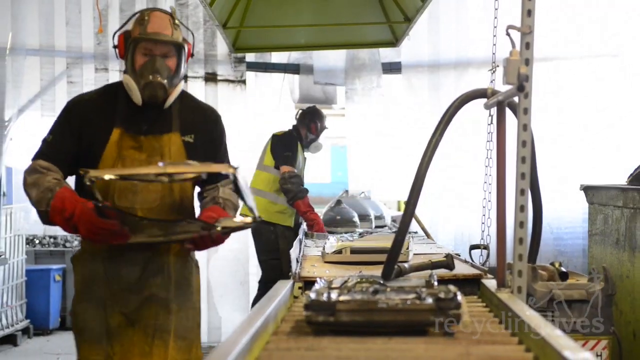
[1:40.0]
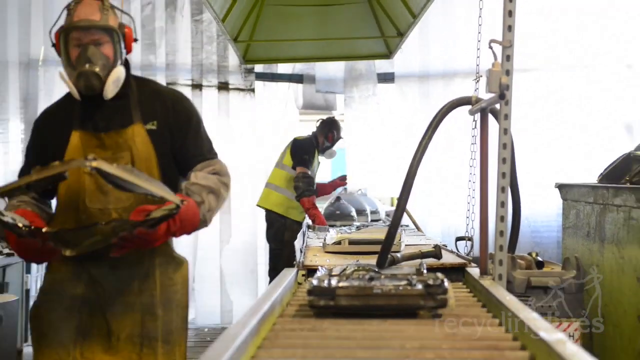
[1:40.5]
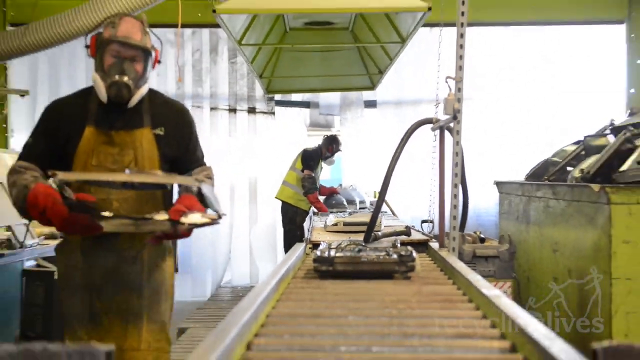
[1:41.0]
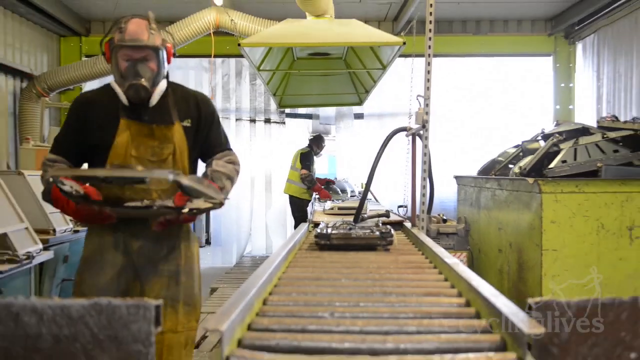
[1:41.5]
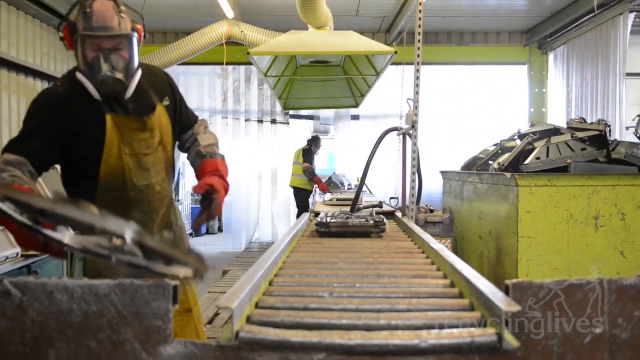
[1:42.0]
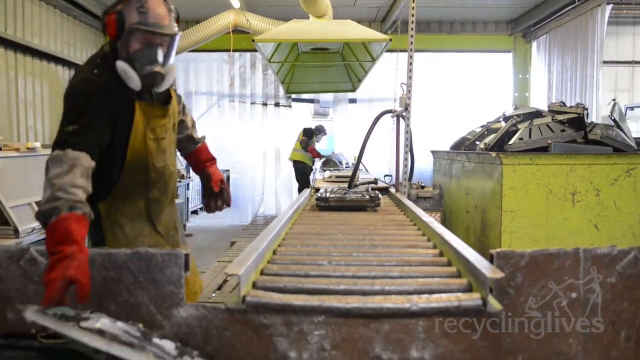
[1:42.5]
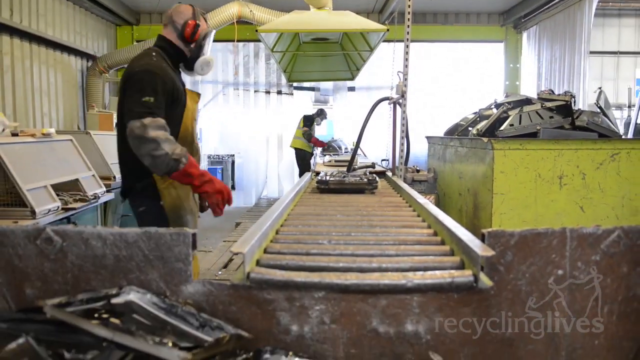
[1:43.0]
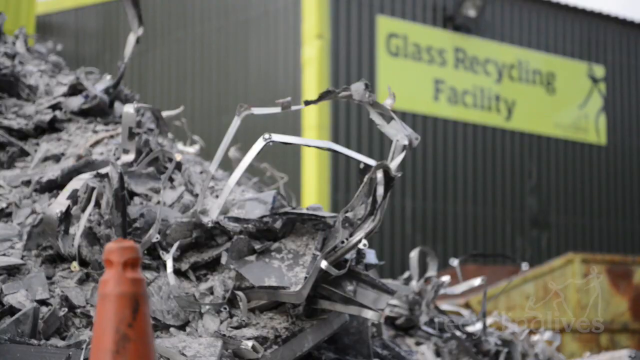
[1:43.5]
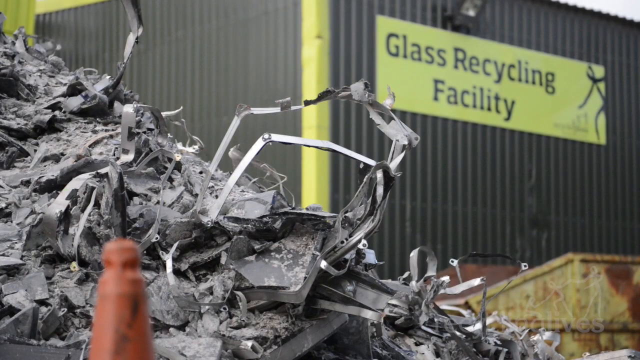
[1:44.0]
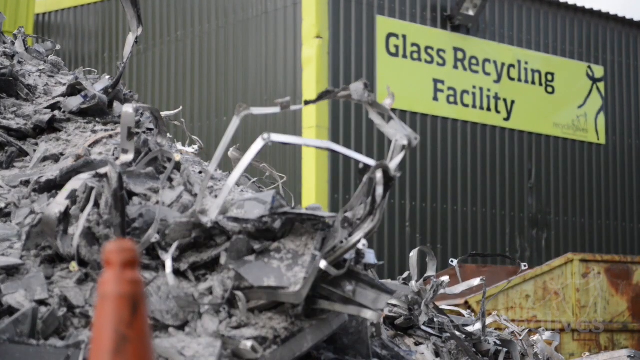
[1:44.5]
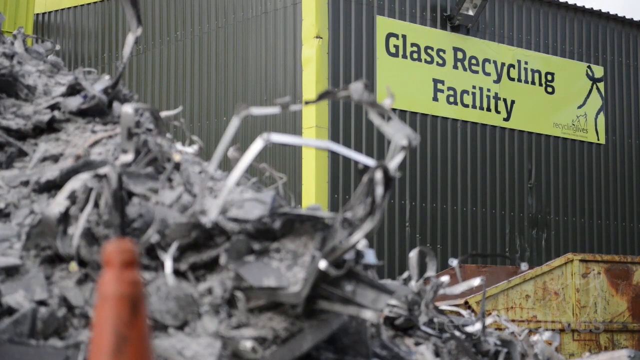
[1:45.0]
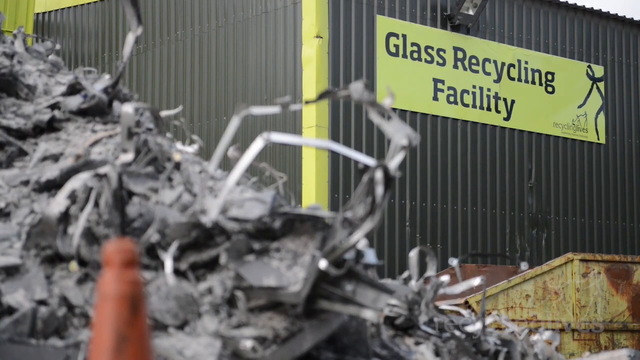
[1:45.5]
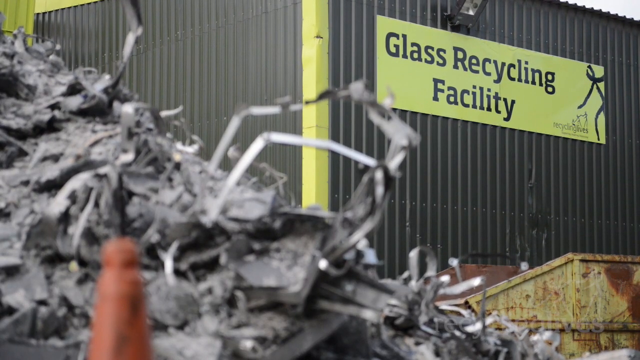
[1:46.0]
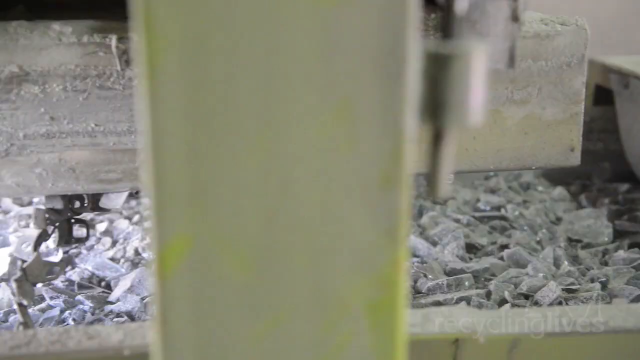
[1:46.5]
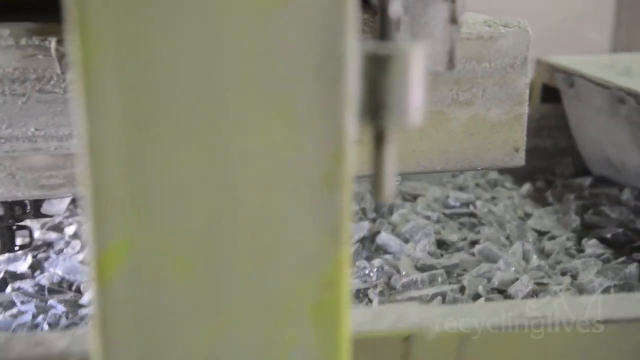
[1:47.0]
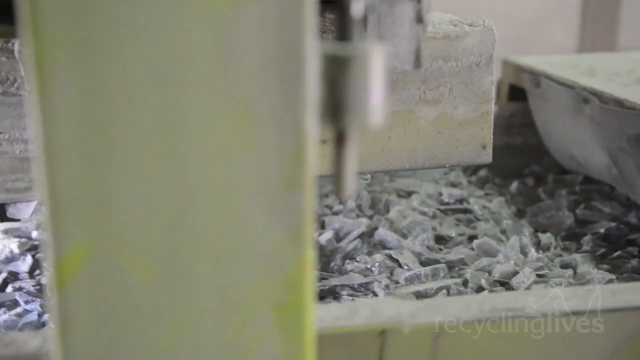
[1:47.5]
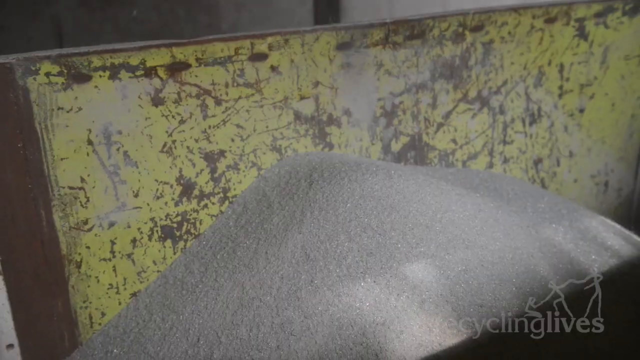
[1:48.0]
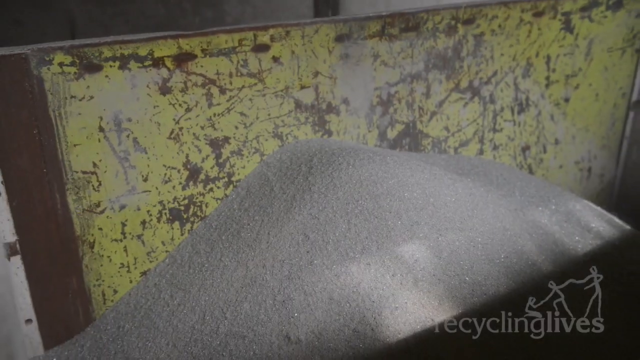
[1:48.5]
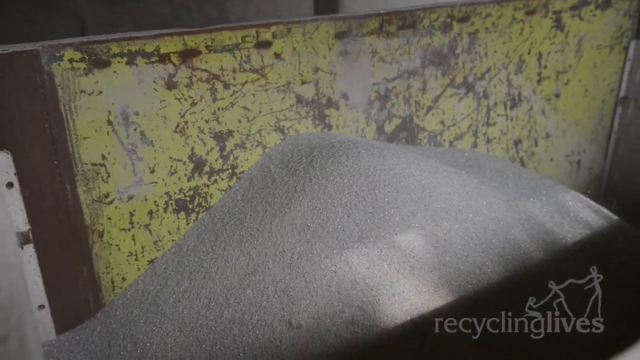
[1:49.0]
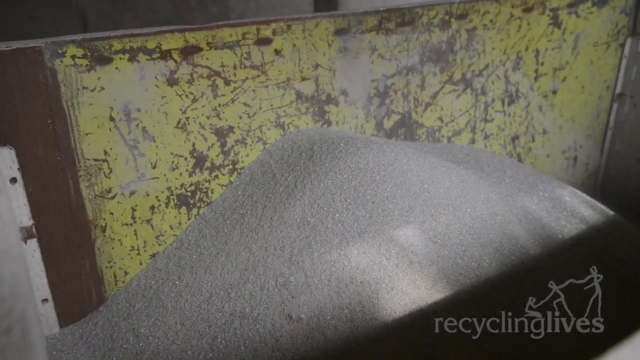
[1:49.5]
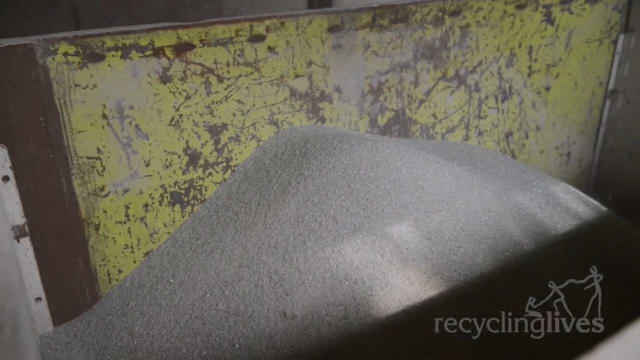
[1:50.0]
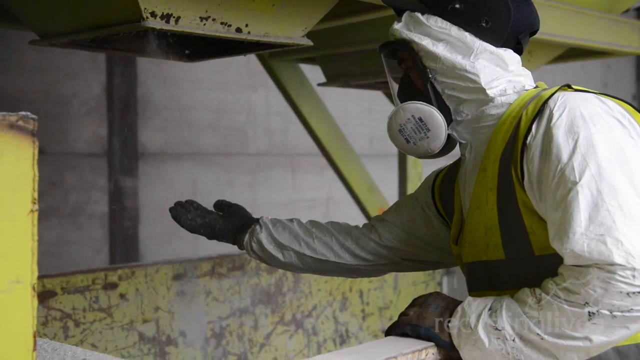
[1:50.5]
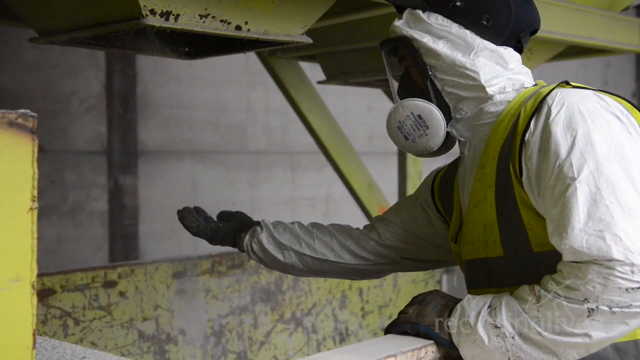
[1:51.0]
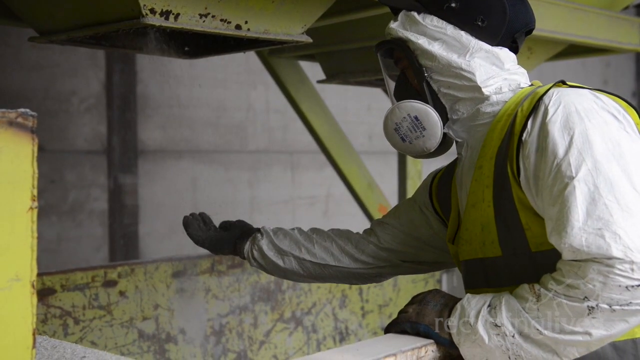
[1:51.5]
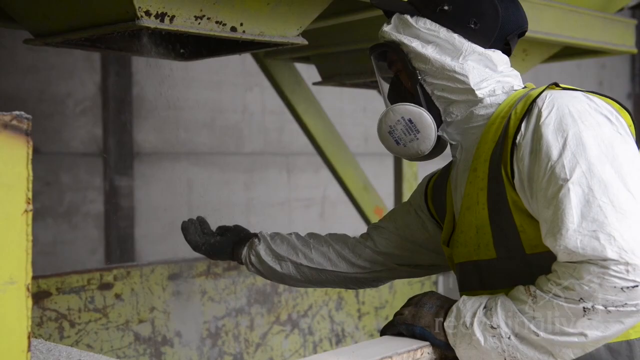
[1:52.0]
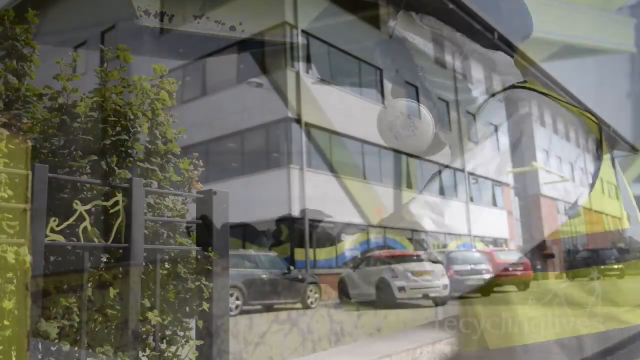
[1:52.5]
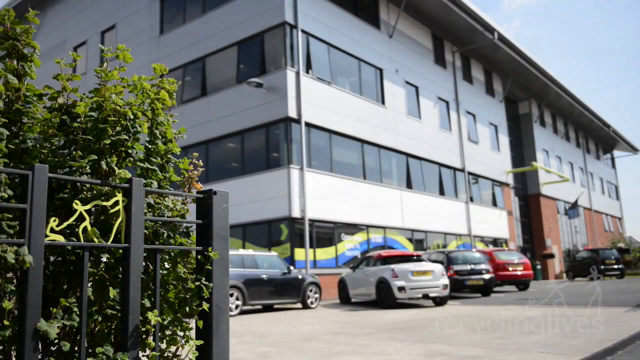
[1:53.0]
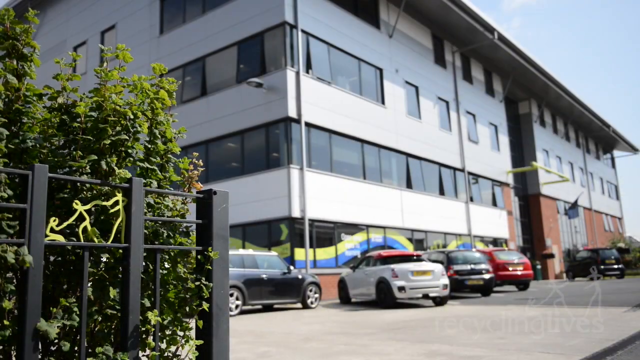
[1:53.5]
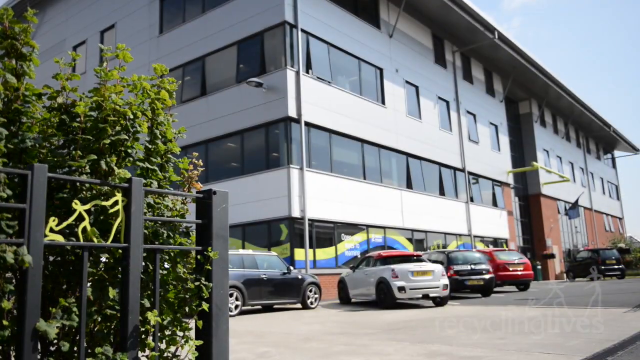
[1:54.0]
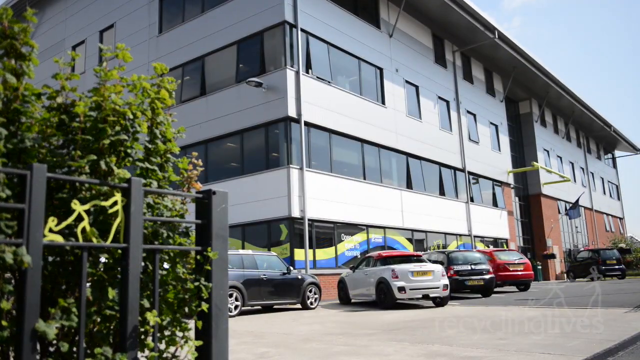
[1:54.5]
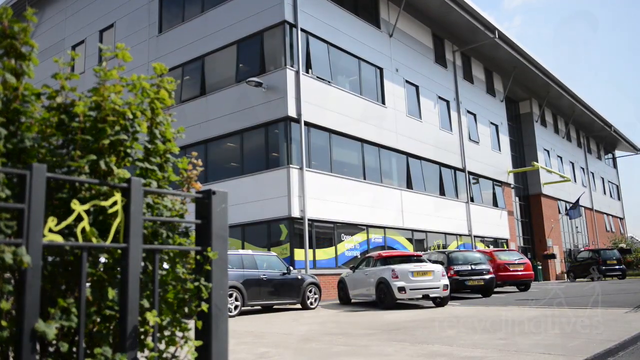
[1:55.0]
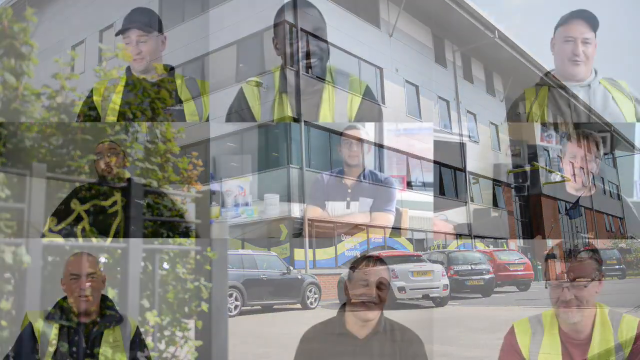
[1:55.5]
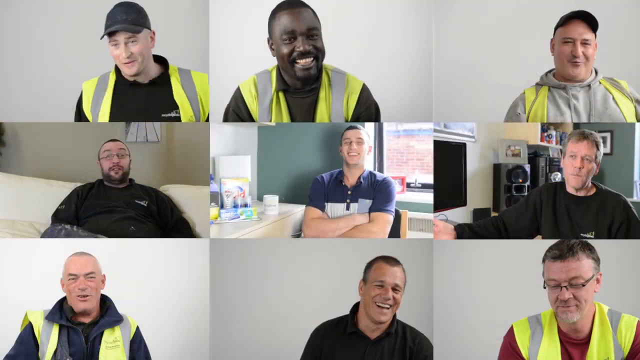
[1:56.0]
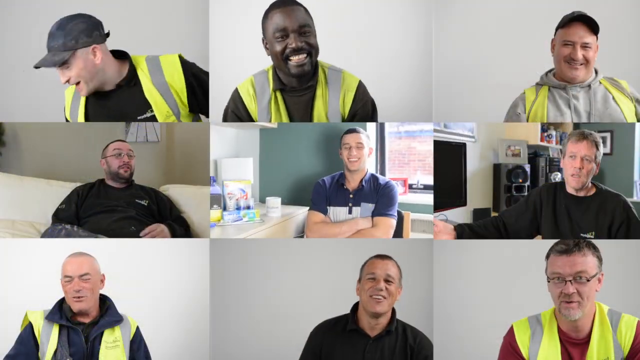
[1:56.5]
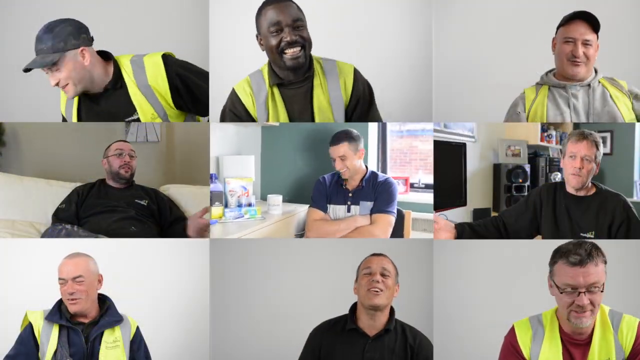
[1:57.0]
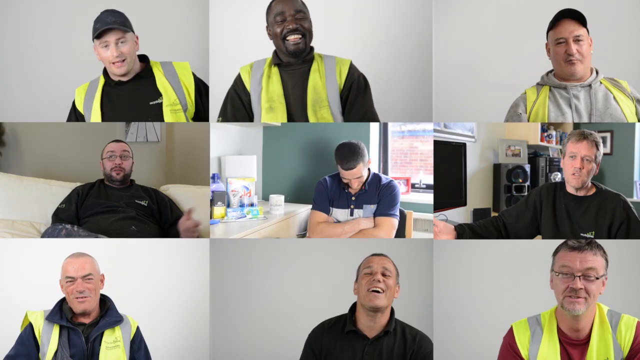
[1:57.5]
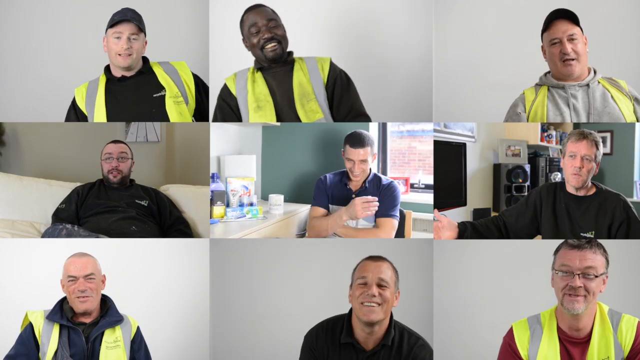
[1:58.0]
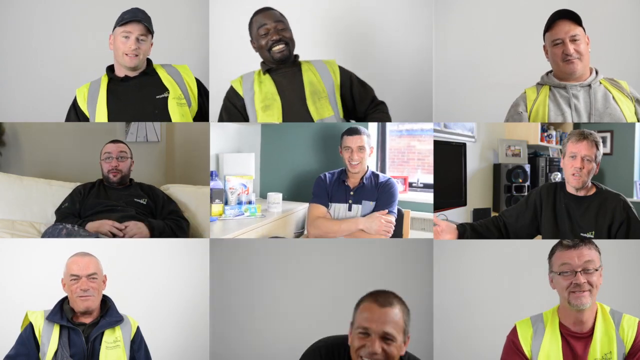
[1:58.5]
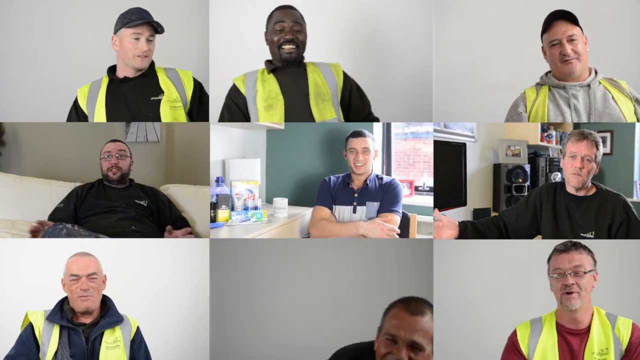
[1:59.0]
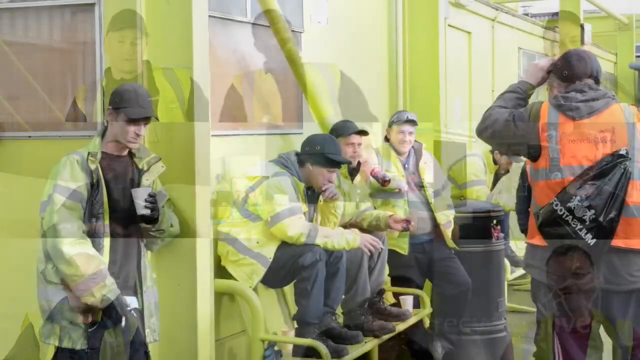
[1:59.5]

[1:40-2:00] A man wearing a face mask, a black shirt, red gloves and a yellow apron carries a metal part from an old TV. Above him is some kind of rectangle-shaped light attached to a large hose that is connected to the wall and painted yellow. To his right is a dirty, dusty yellow bin with more TV parts piled up inside it, a conveyor belt is in front of him, and behind him another worker takes the casing off. The man places the metal component in a large bin at the end of the conveyor belt. Next, damaged and destroyed metal scrap is piled somewhere, with a yellow "glass recycling facility" sign with black text hanging on the wall in the background; this is possibly an outdoor scene, and the other walls are black corrugated metal. Then a conveyor belt carries metal pieces, and glittery metal powder sits in a bin whose back wall is painted yellow, with a lot of dents, scratches and chips. A man wearing a face mask, a full-body white plastic safety covering, a hat and a yellow and gray vest holds his hand underneath a machine dispensing the powder. A building is shown from the outside with cars parked in front, and then apparently nine employees appear on a Zoom call.